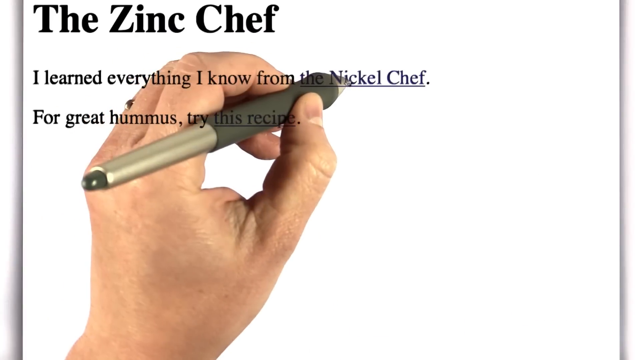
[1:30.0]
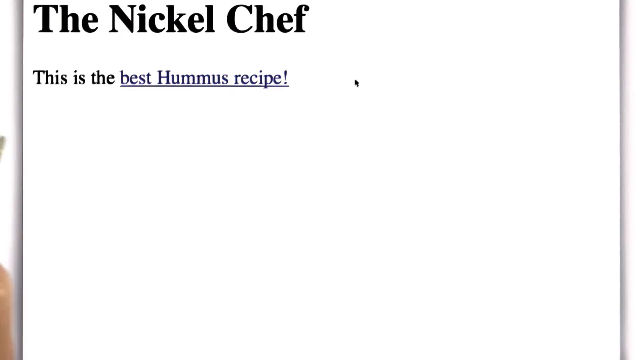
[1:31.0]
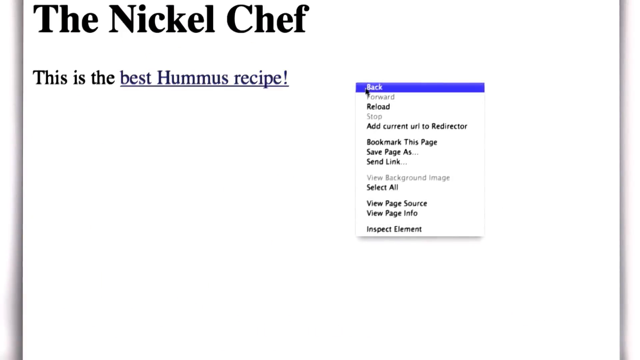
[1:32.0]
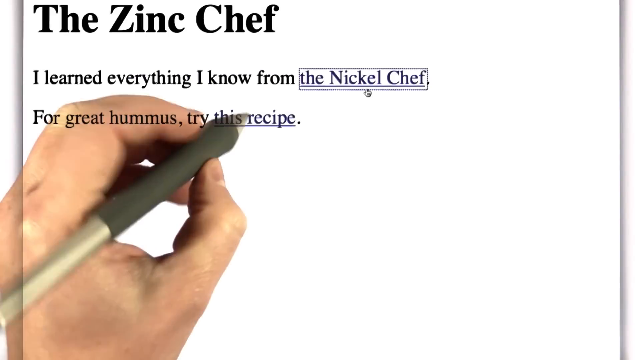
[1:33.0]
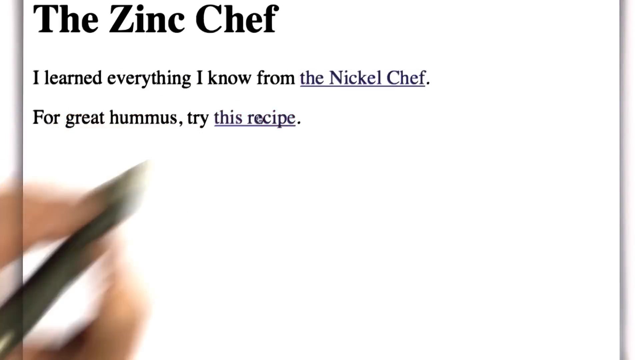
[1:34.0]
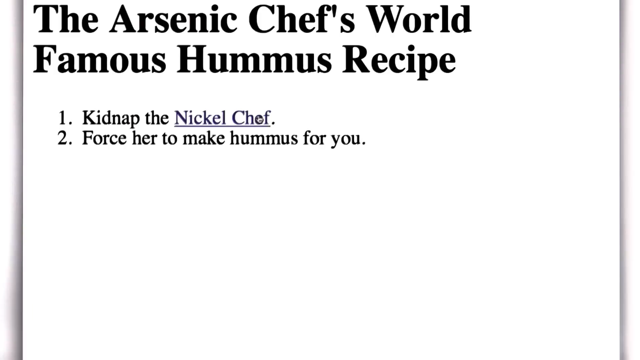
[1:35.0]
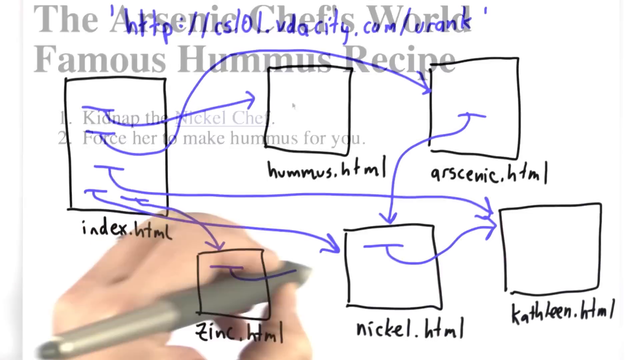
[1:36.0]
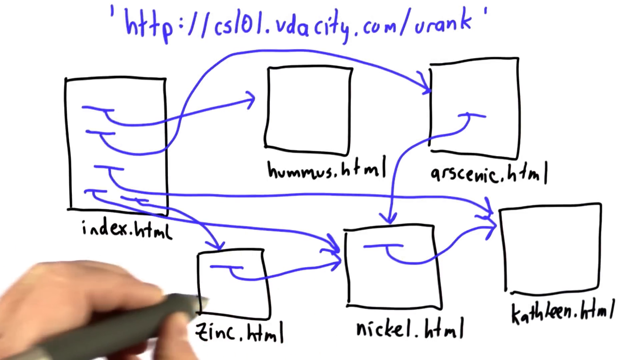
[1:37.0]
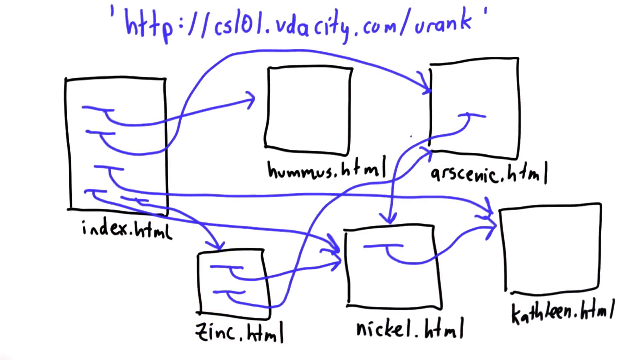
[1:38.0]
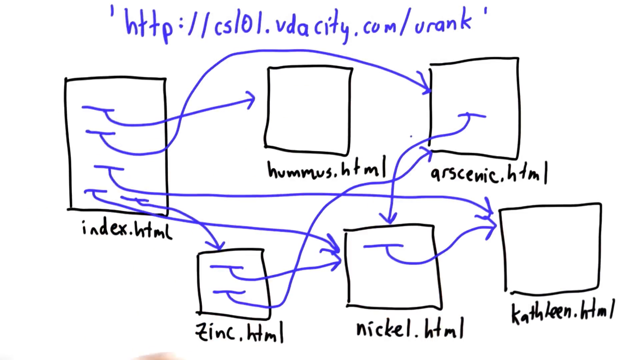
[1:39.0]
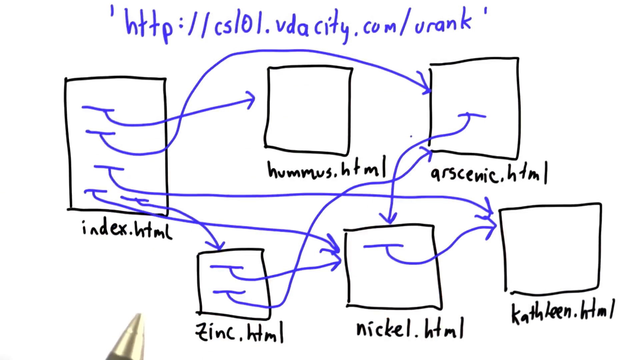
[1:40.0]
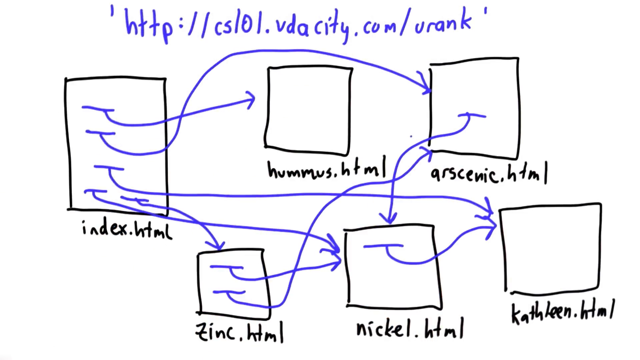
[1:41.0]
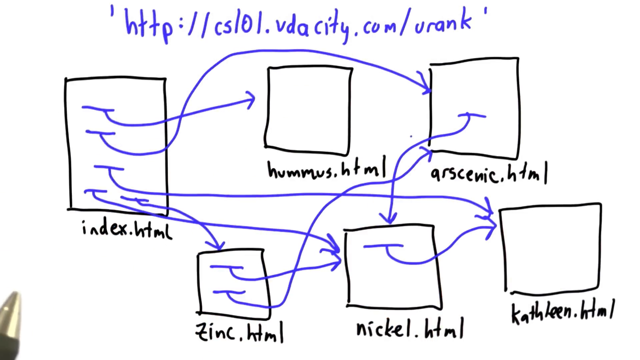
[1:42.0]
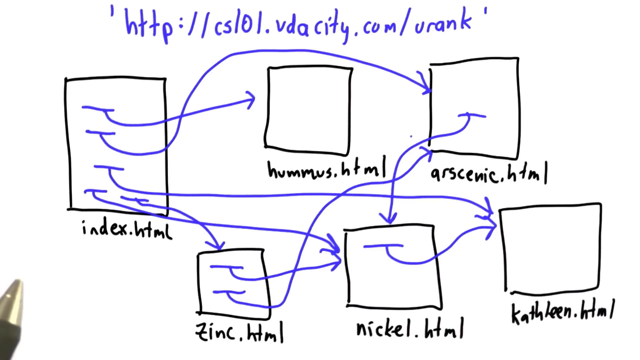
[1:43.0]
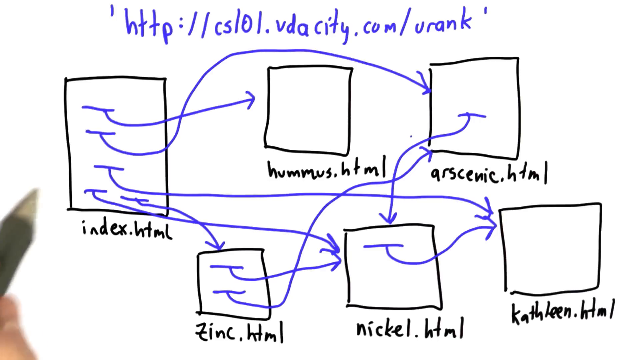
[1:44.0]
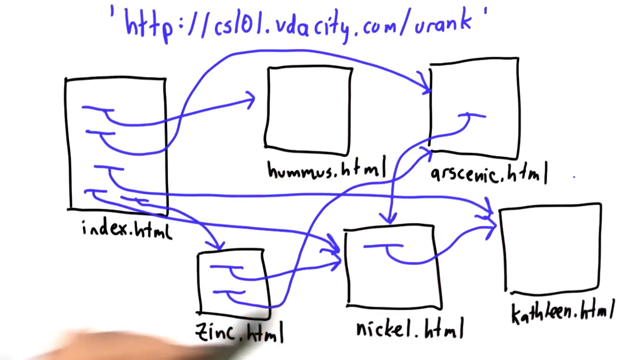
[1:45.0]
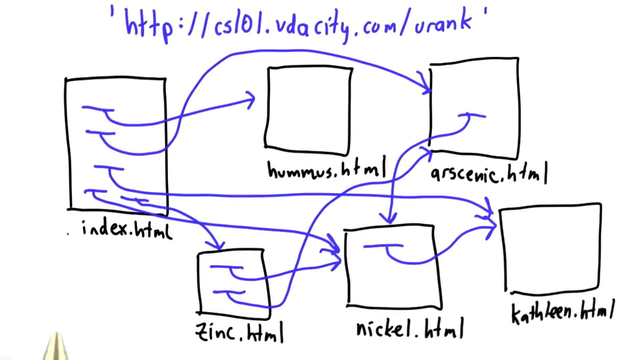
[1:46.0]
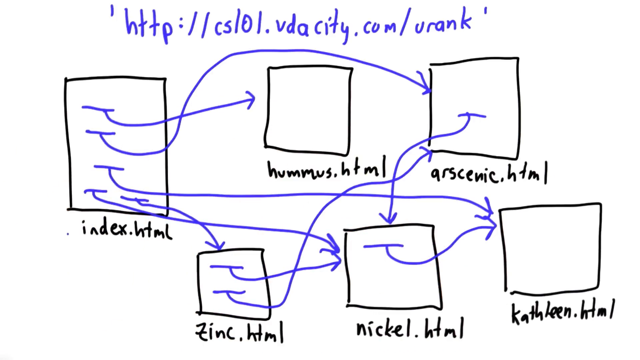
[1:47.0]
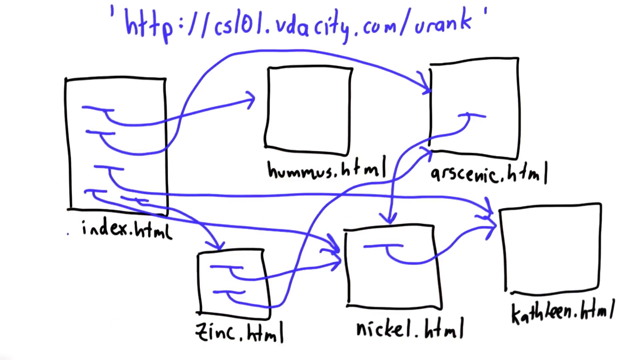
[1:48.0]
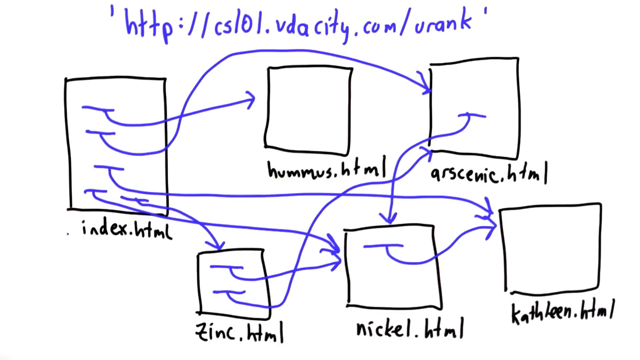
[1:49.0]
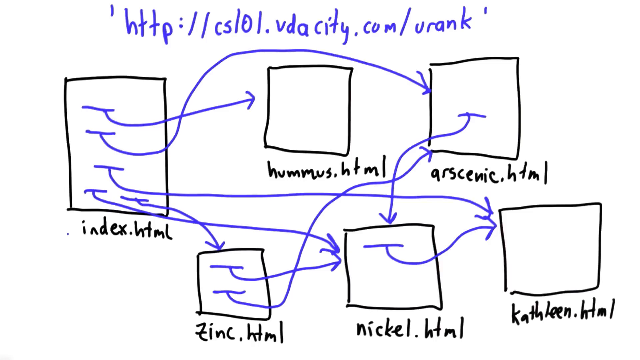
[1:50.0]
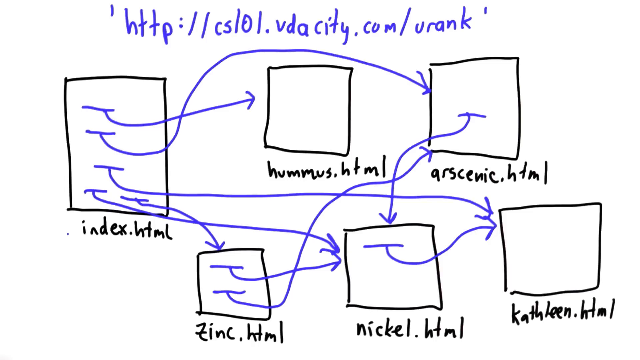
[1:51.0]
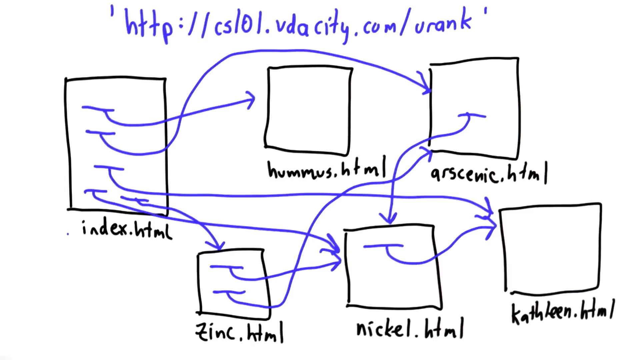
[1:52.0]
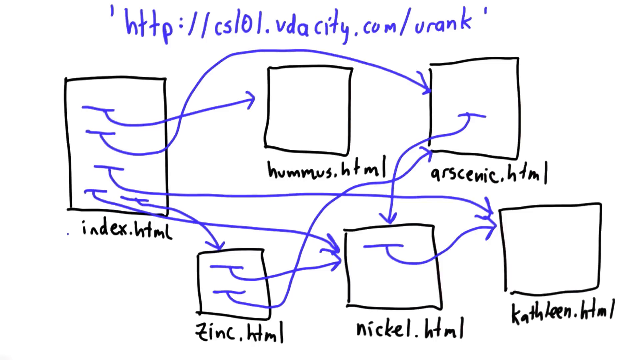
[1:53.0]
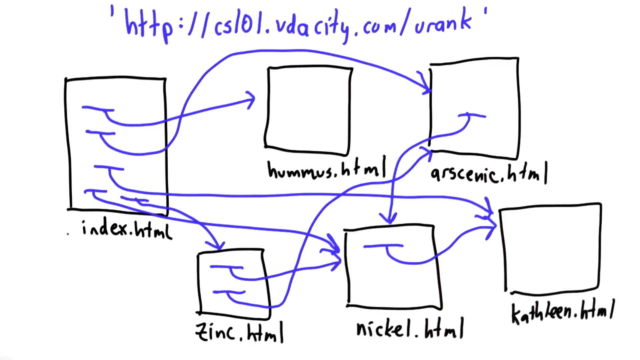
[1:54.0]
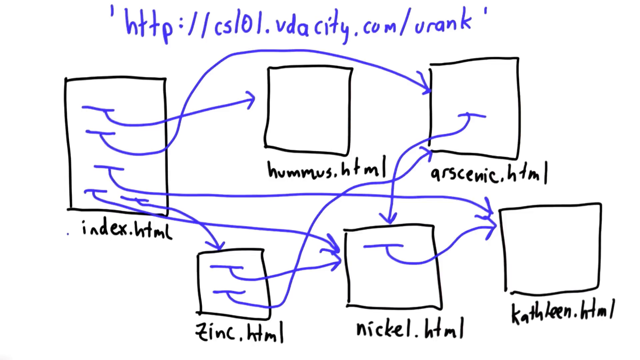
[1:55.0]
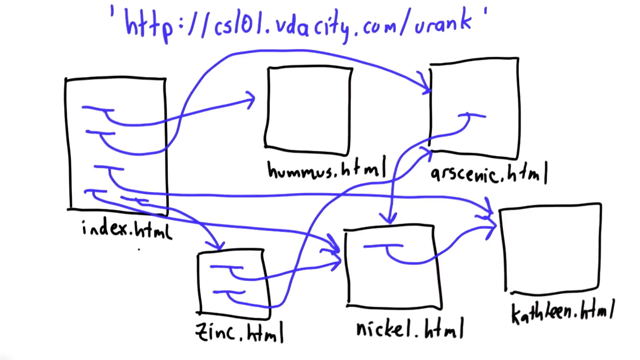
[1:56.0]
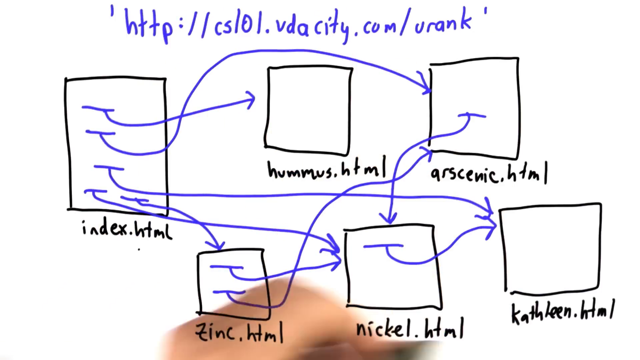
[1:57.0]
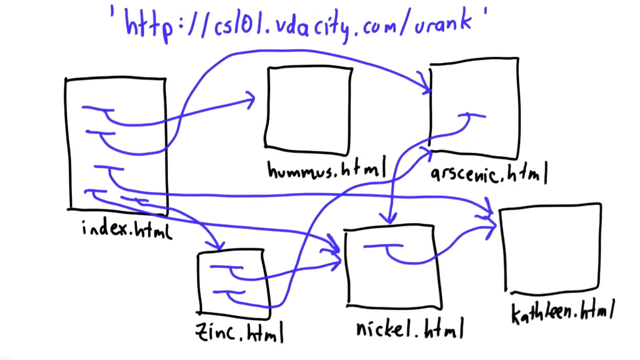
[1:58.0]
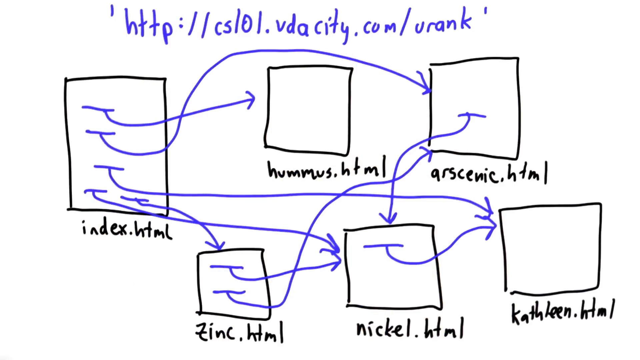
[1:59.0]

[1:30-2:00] Text states that everything was learned from a chef known for great hams and suggests trying the stated recipe. Another chef's world famous ham recipe is shown, whose first step appears to be to kidnap Nicole and force her to make the ham.